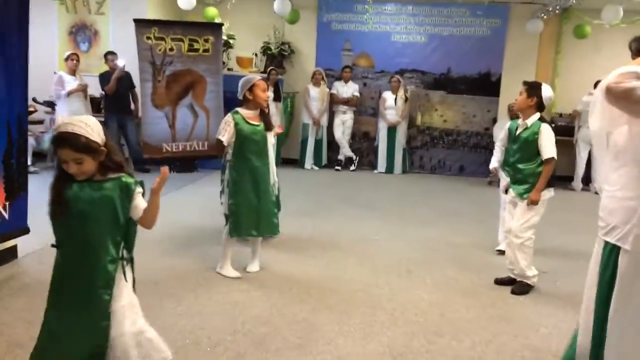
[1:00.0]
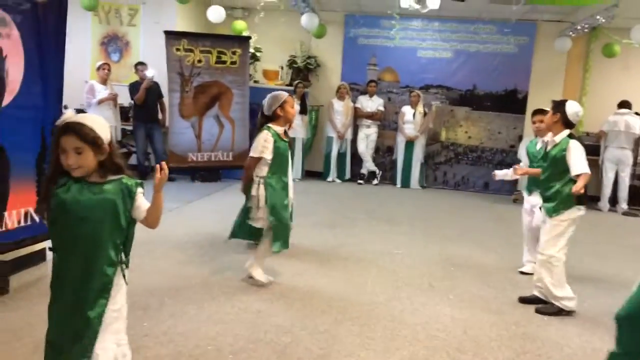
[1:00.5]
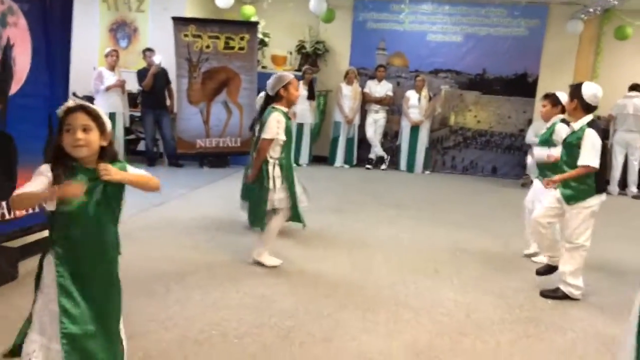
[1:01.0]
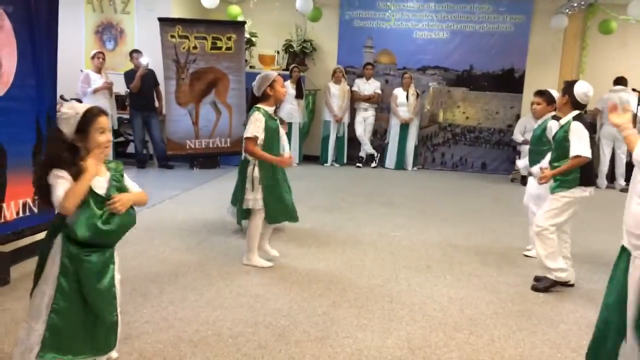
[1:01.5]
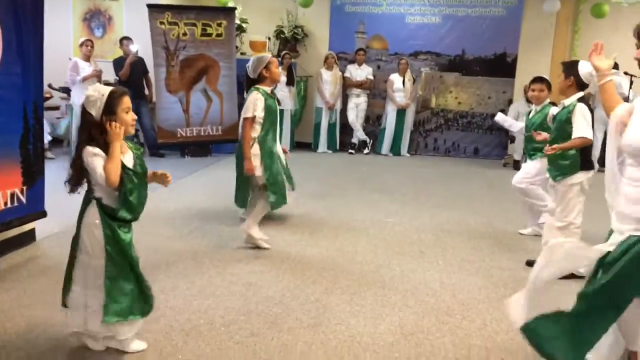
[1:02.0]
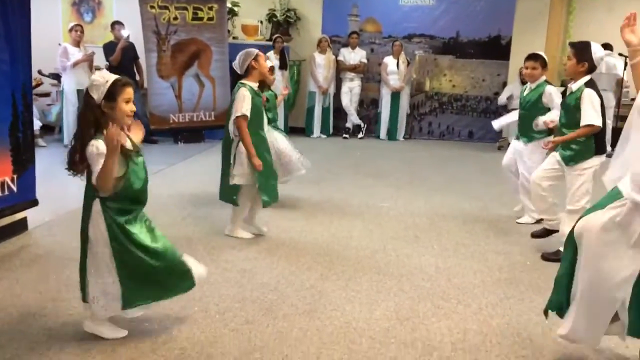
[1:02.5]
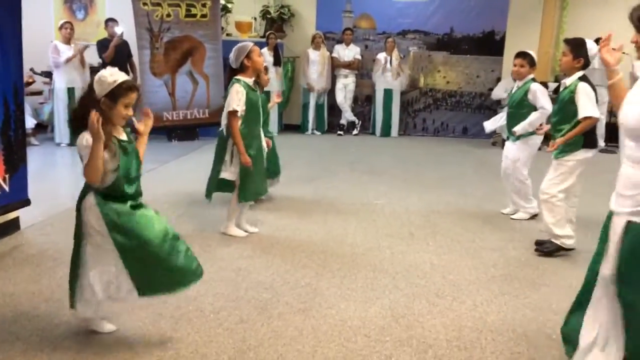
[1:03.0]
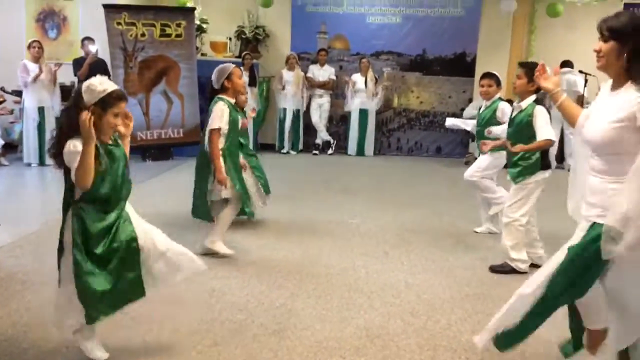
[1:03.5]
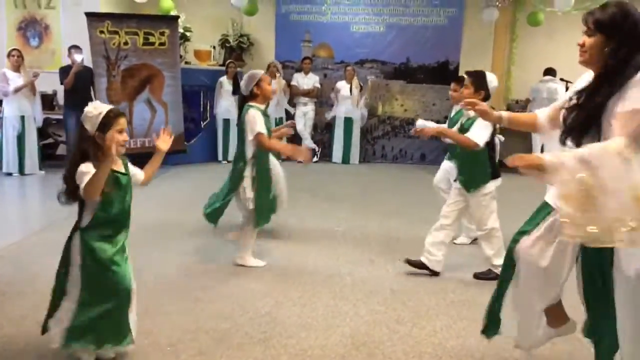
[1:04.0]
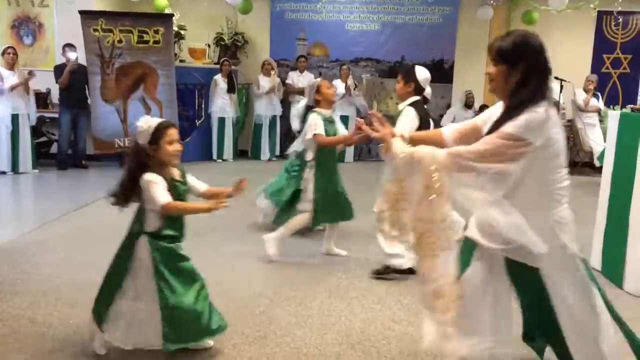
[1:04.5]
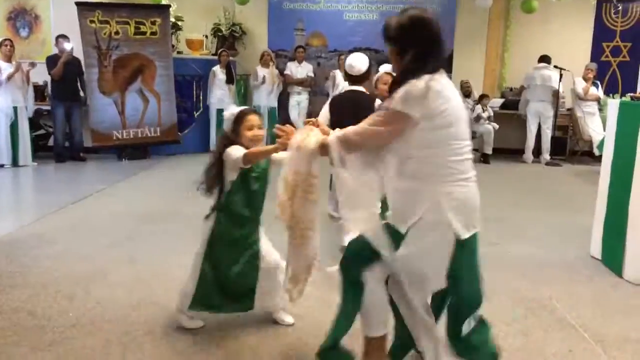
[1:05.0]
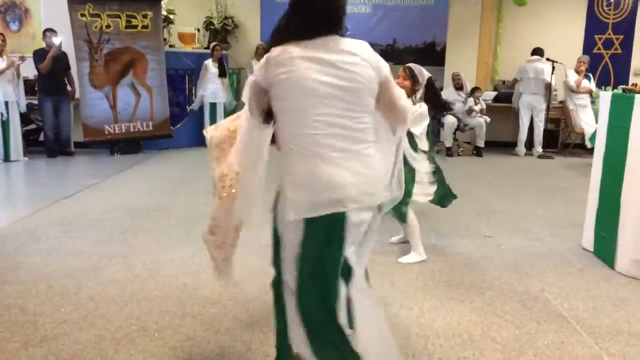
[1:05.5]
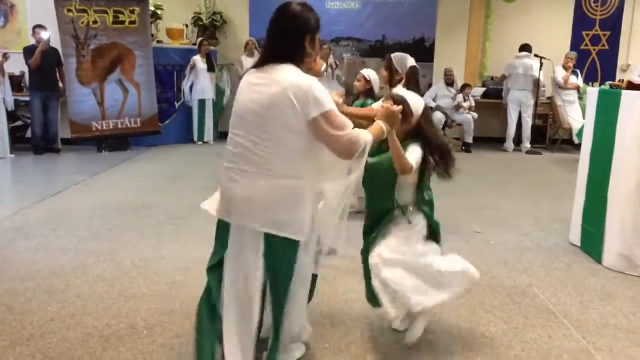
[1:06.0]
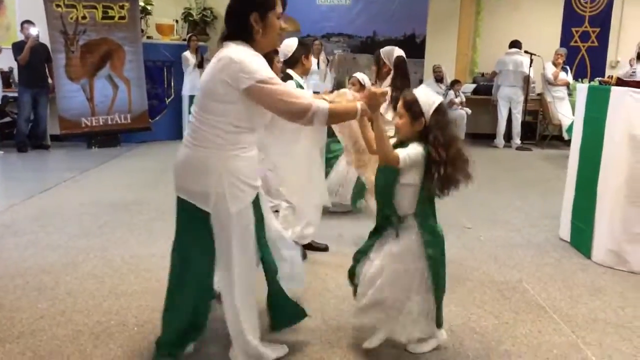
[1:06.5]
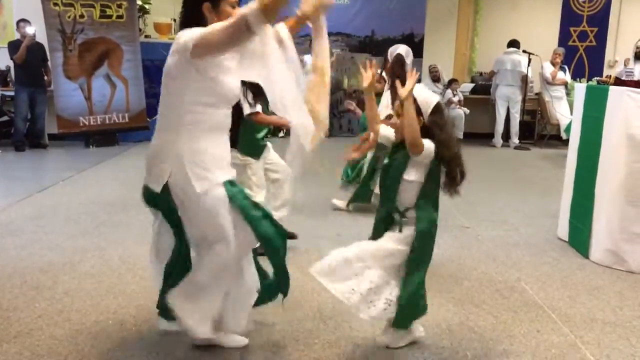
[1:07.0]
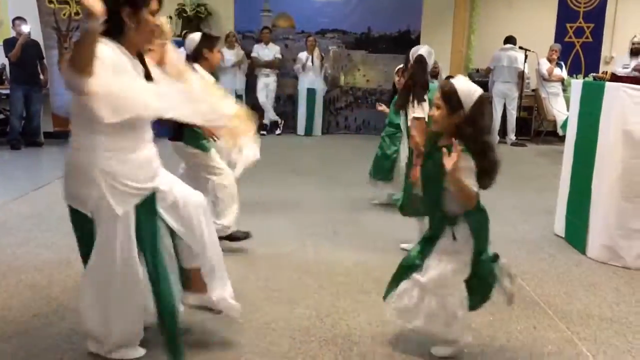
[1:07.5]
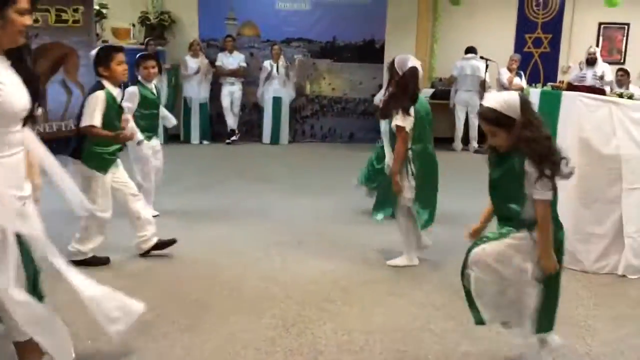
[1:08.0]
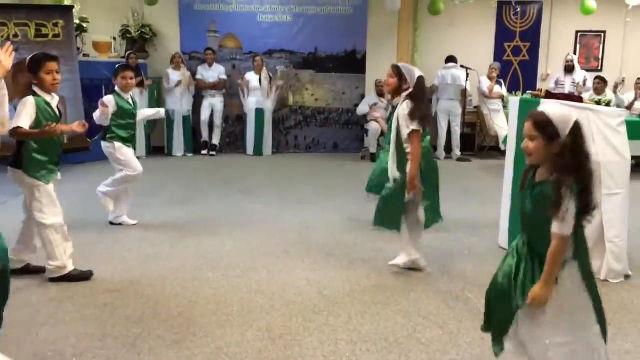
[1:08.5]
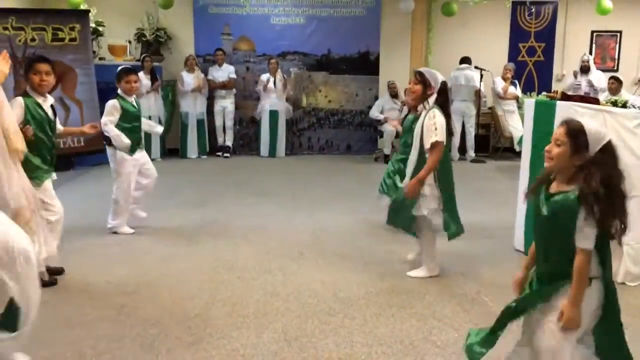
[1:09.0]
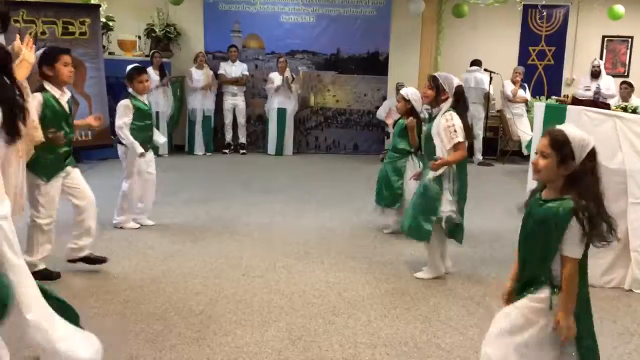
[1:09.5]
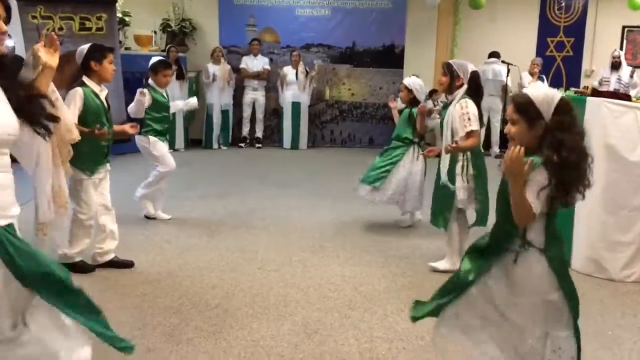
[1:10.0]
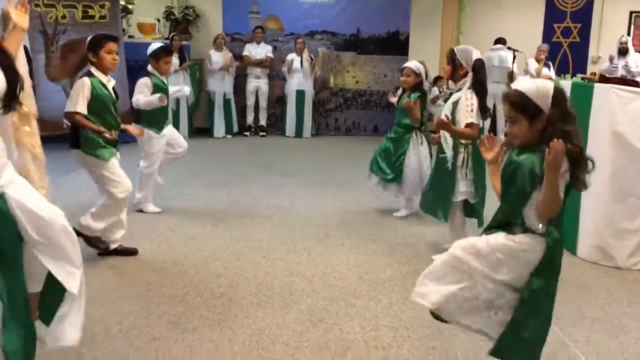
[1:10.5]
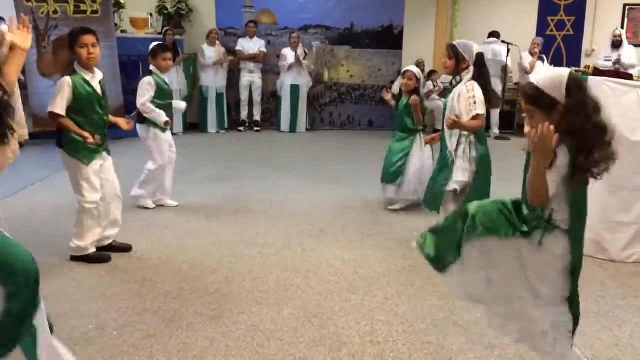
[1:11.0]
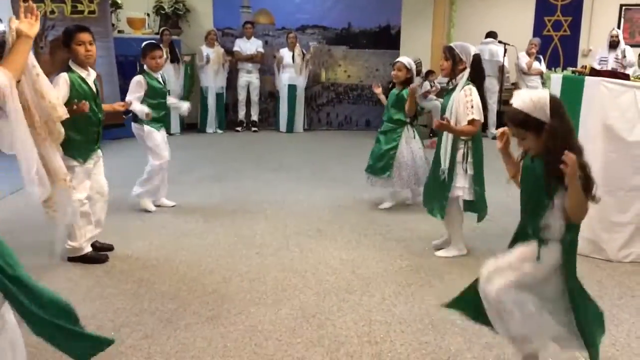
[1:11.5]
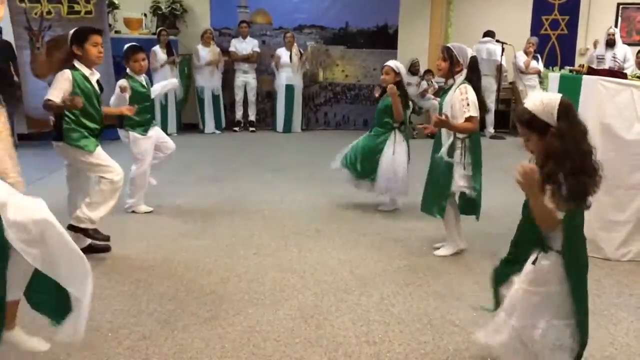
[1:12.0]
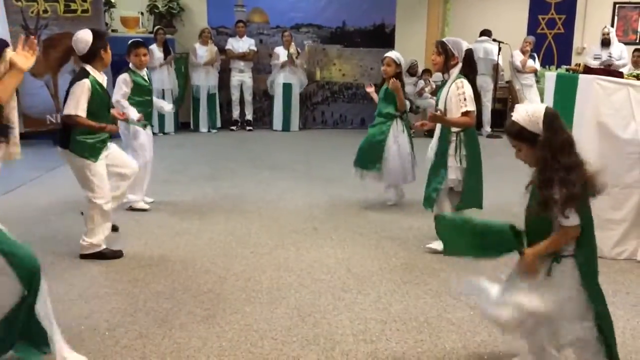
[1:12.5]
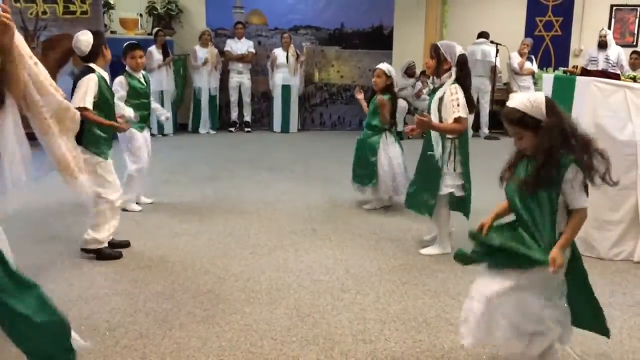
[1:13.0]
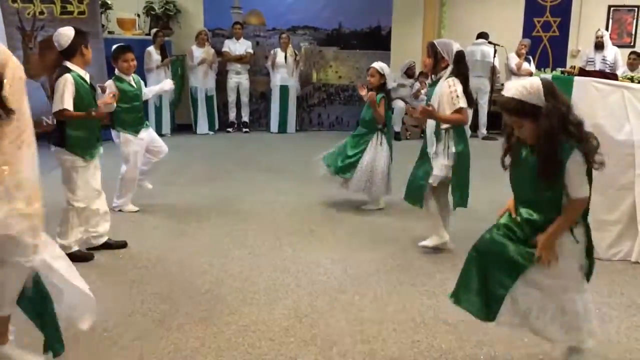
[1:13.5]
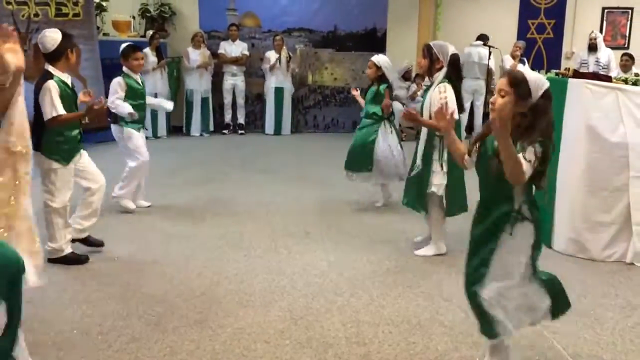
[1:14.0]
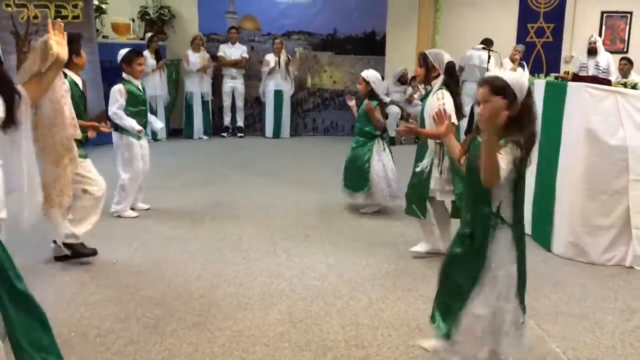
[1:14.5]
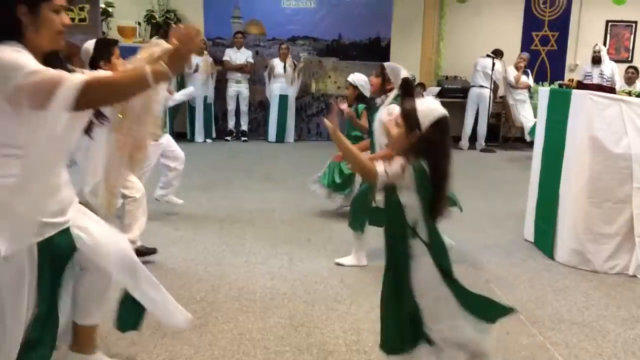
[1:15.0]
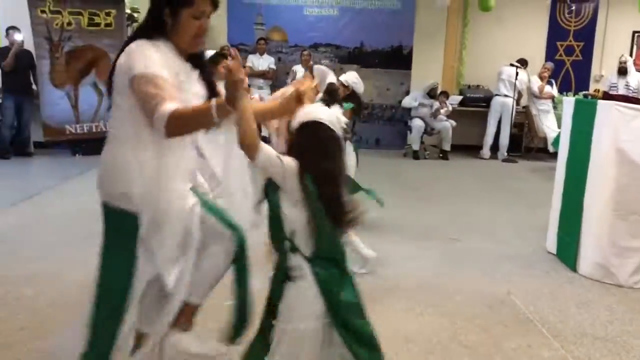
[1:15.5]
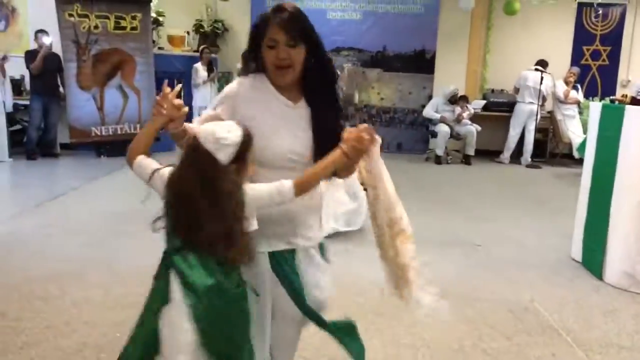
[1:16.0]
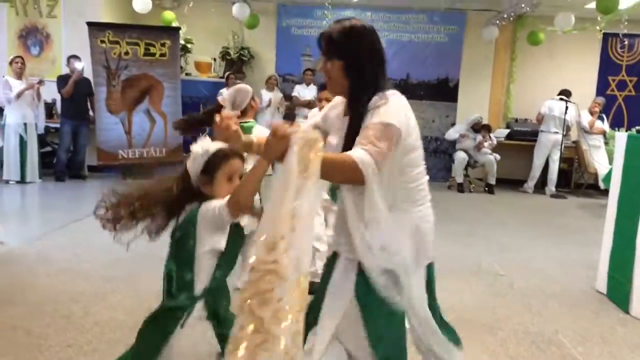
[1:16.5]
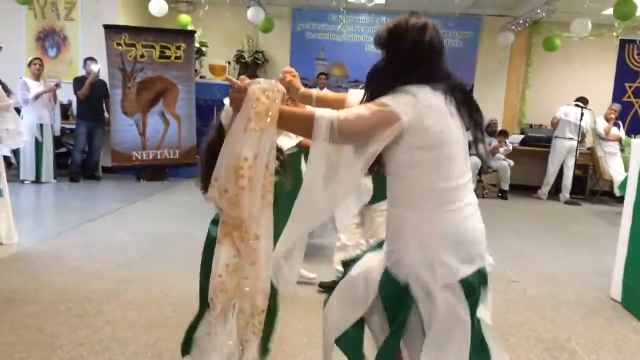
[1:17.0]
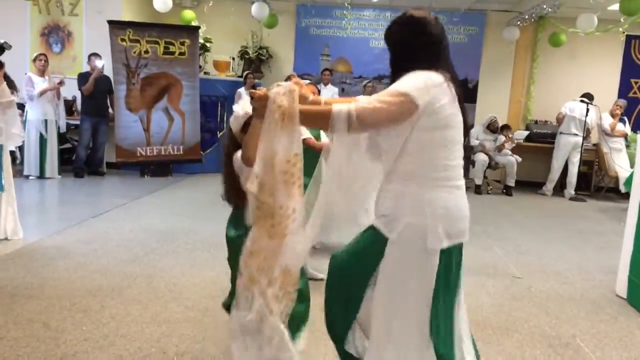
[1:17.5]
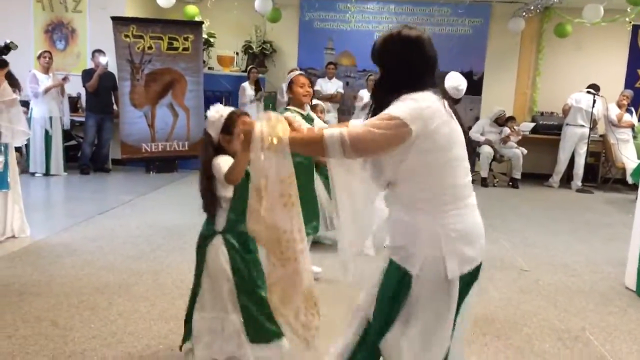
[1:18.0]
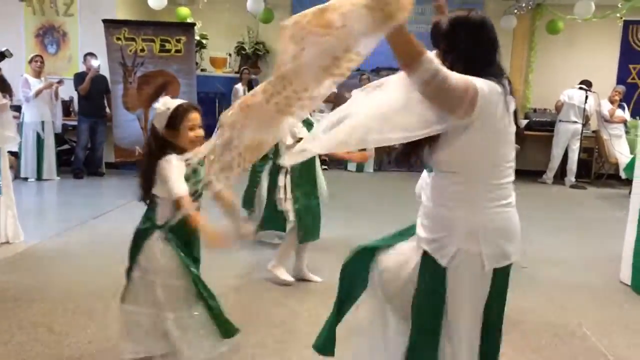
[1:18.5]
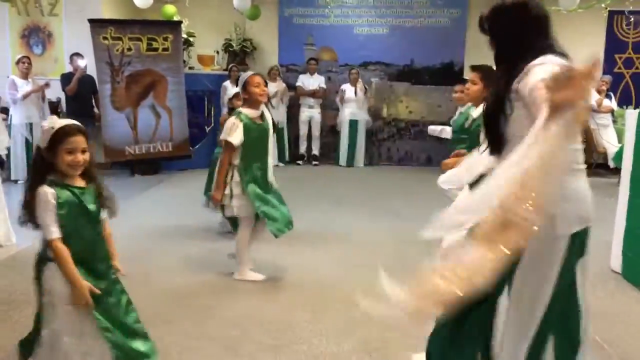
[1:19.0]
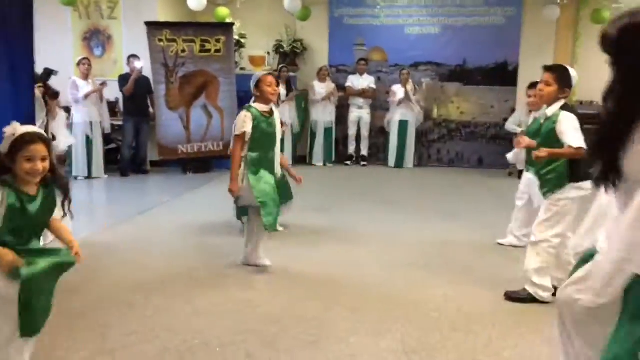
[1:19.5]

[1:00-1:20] The children keep performing while everyone watches in a room that may be a community center or an extra room used for the religious gathering. The theme is green and white. The little girl at the end seems to forget to dance for a moment. The children dance out toward each other, switch sides, and appear to skip in place, then hold hands, swing around, and move back.